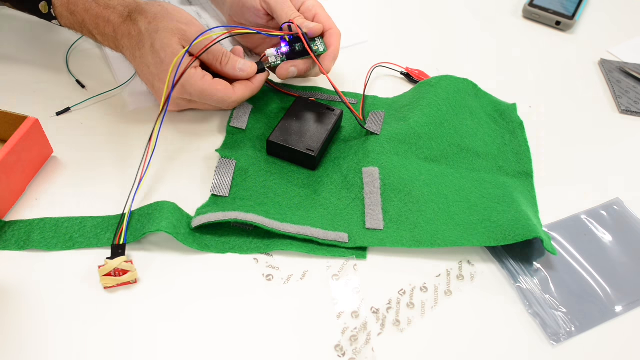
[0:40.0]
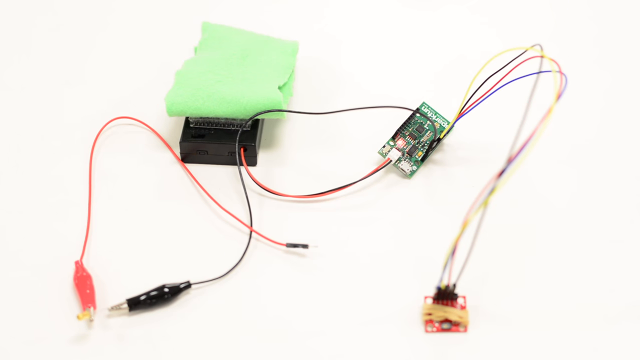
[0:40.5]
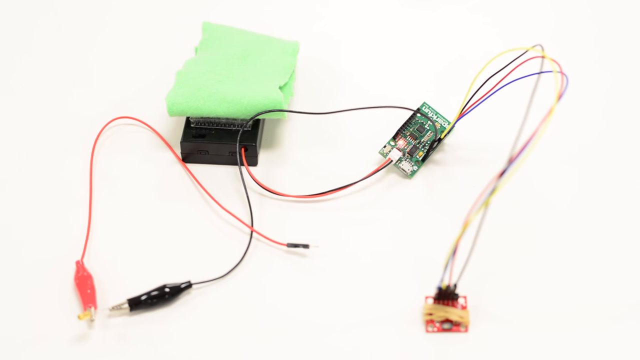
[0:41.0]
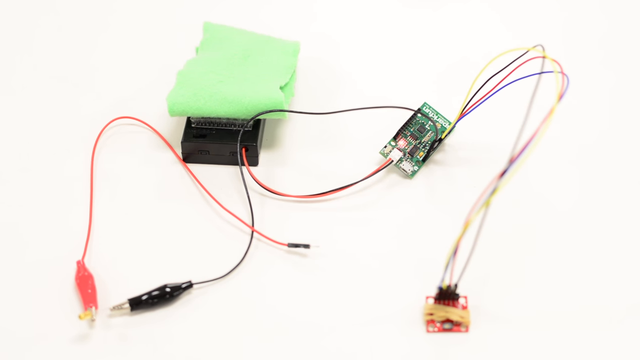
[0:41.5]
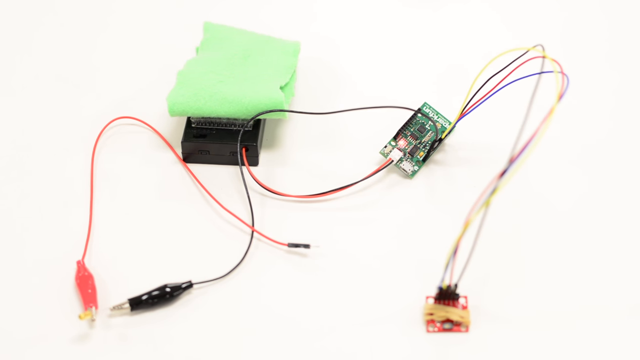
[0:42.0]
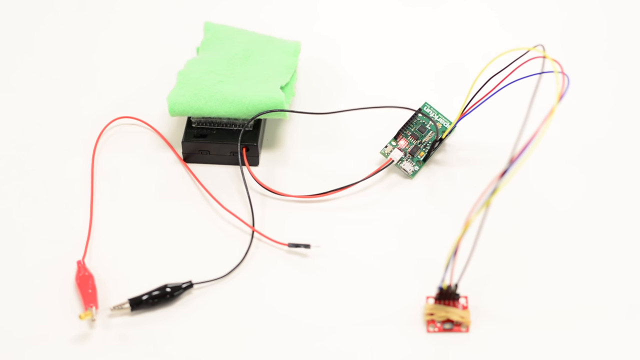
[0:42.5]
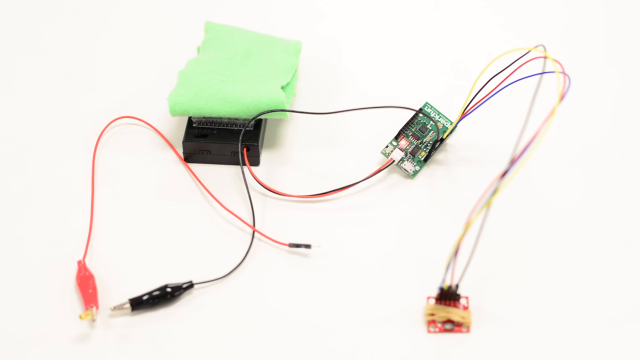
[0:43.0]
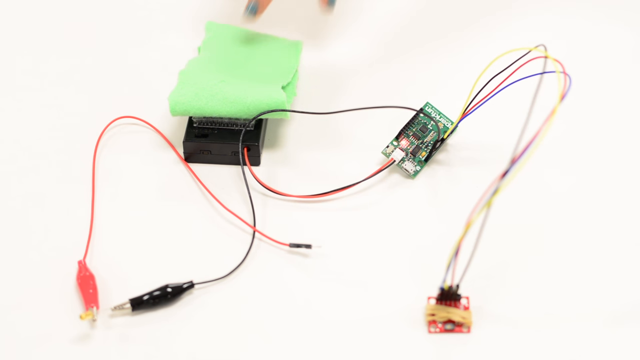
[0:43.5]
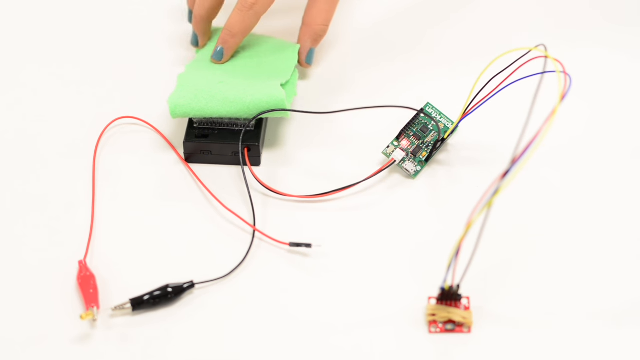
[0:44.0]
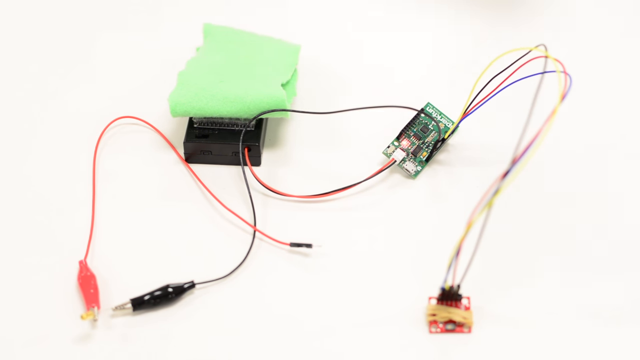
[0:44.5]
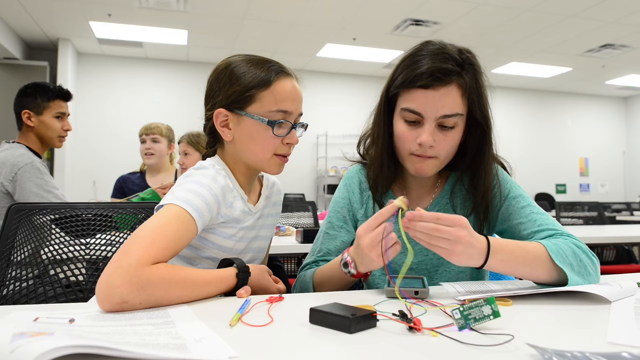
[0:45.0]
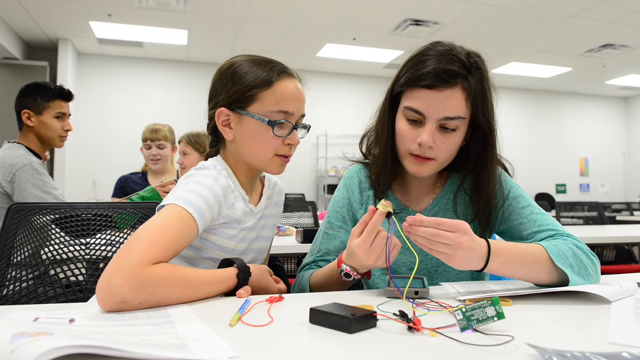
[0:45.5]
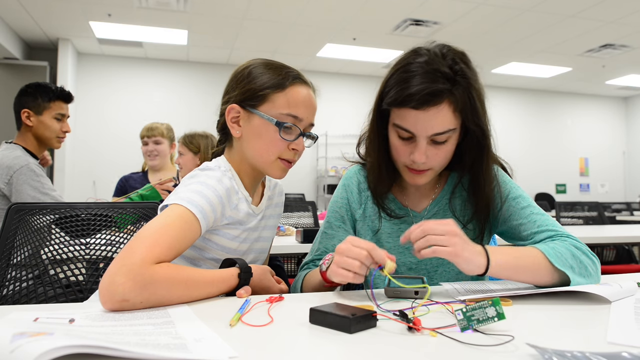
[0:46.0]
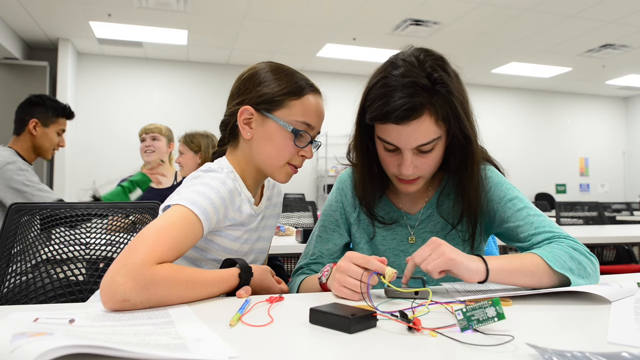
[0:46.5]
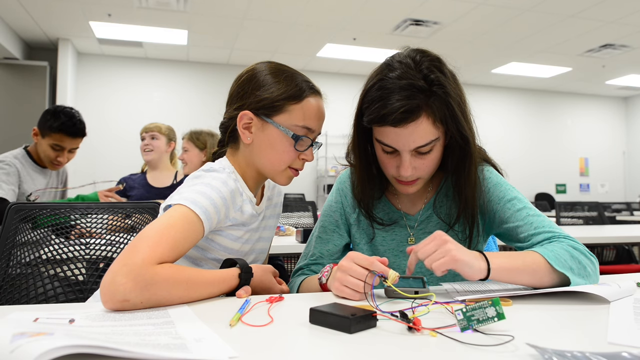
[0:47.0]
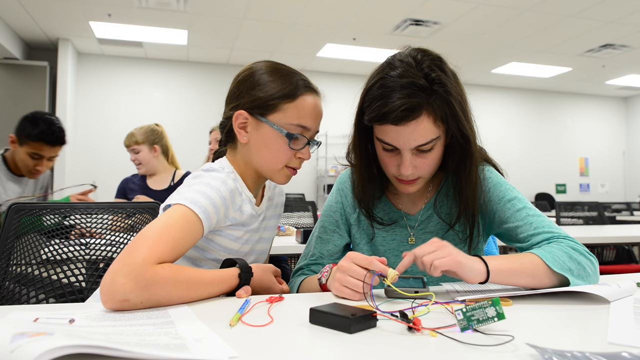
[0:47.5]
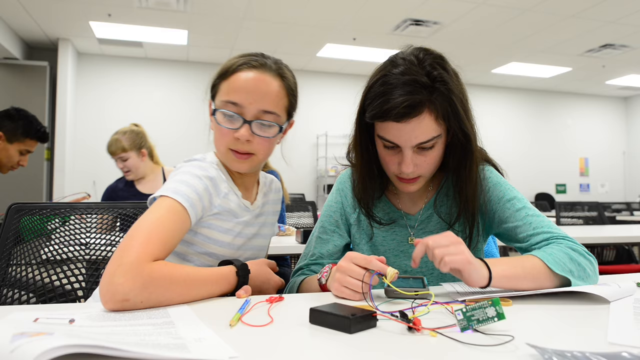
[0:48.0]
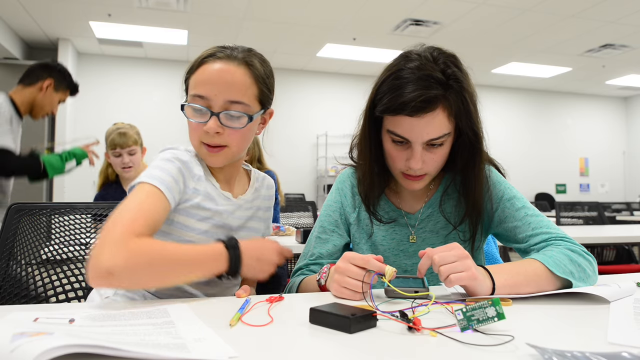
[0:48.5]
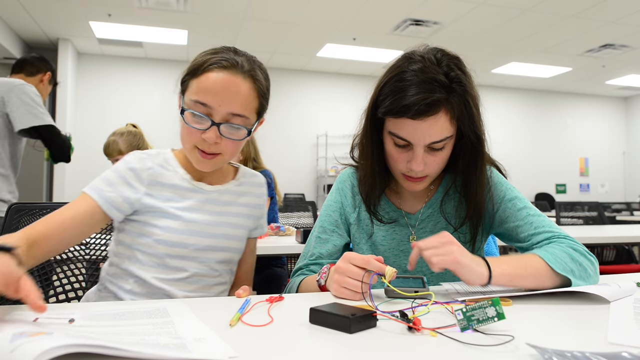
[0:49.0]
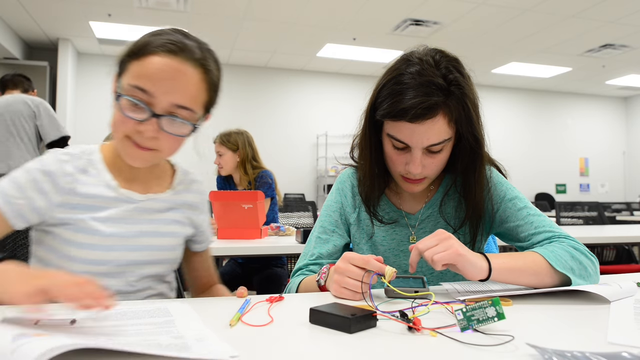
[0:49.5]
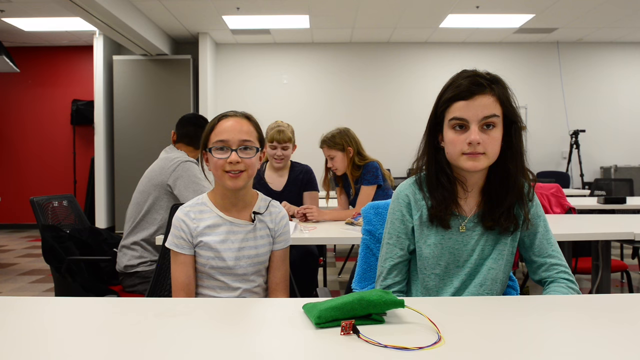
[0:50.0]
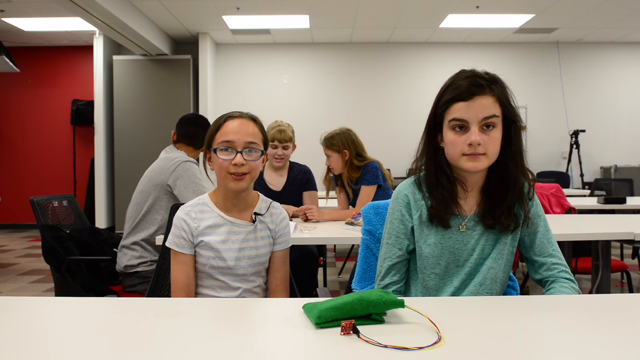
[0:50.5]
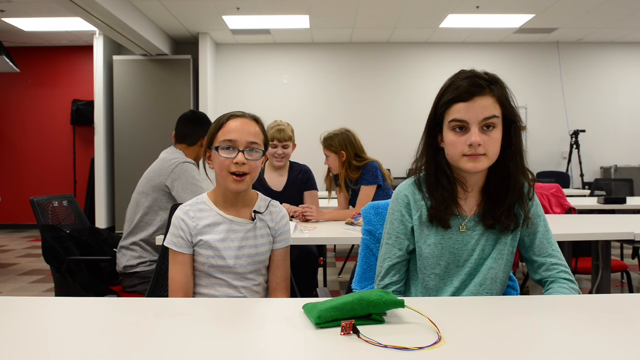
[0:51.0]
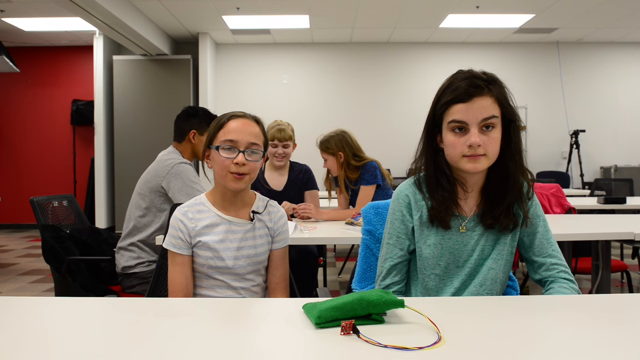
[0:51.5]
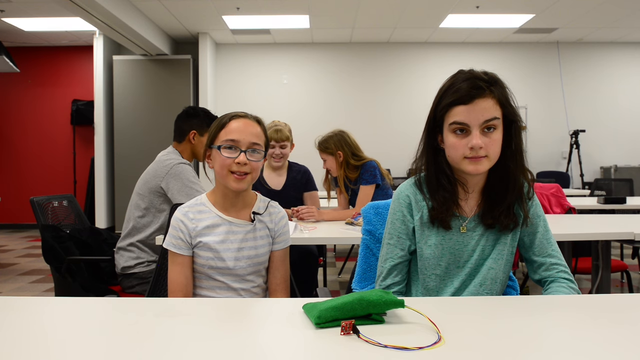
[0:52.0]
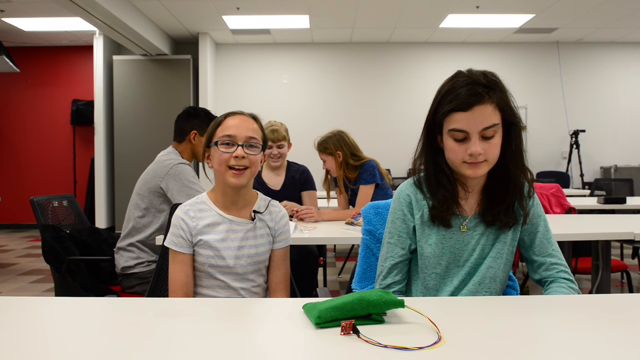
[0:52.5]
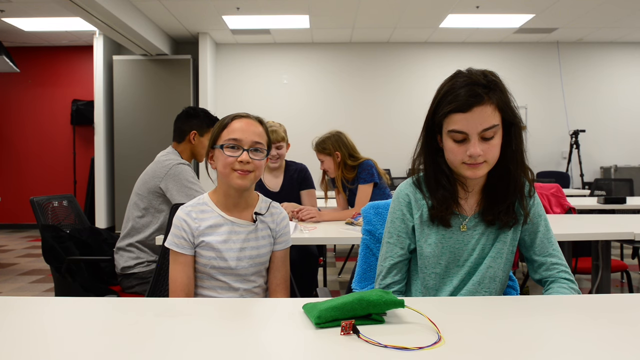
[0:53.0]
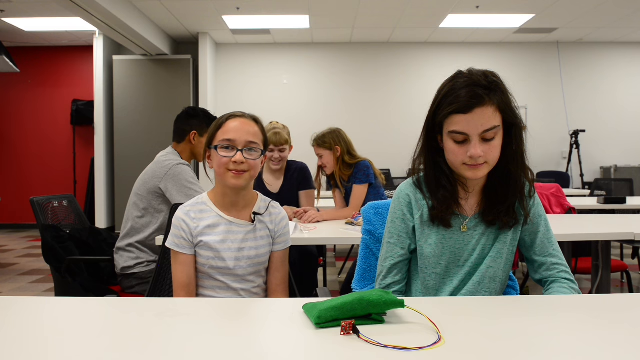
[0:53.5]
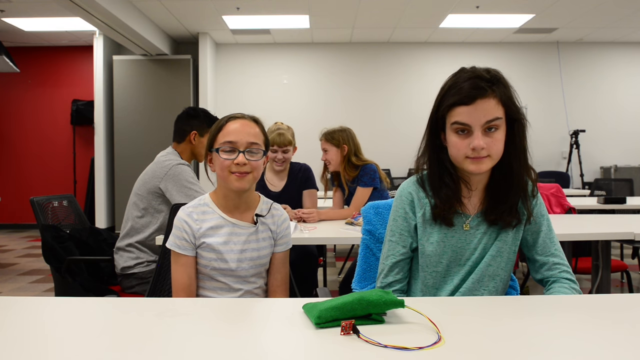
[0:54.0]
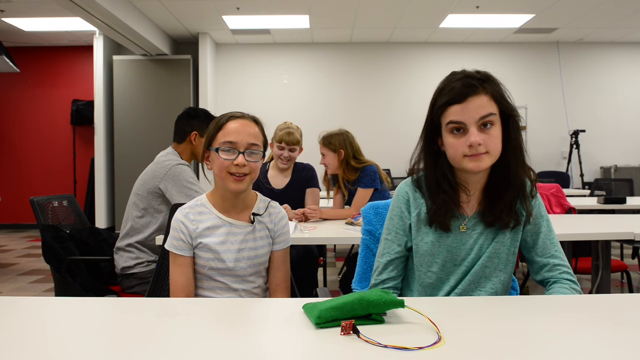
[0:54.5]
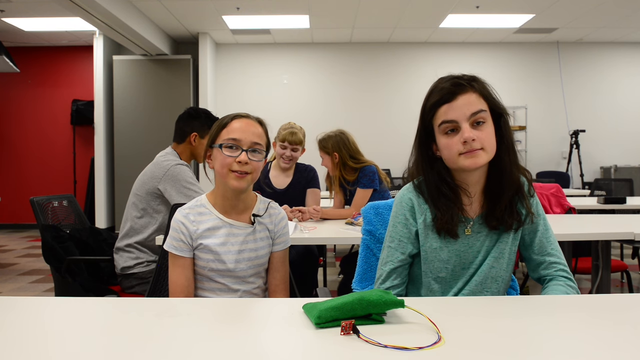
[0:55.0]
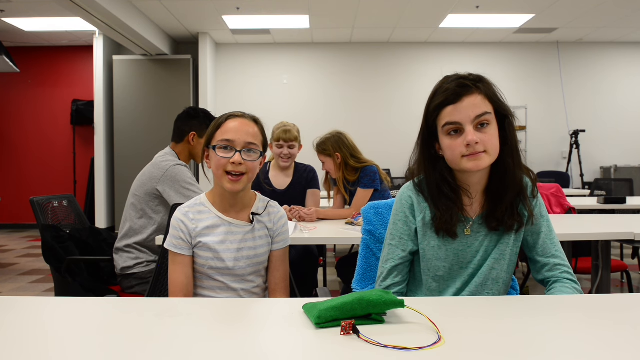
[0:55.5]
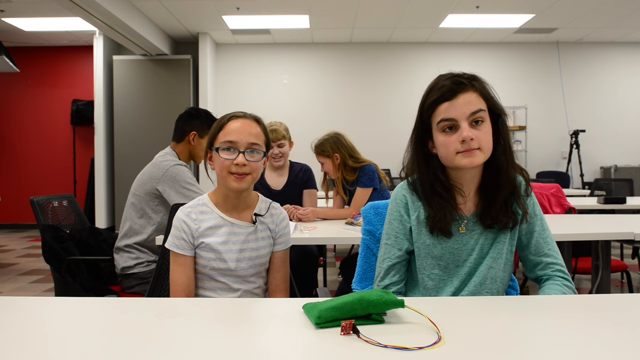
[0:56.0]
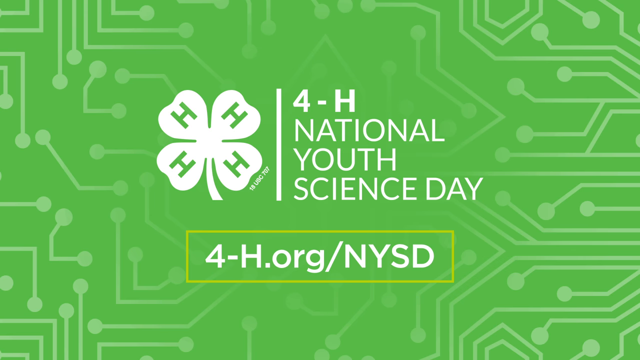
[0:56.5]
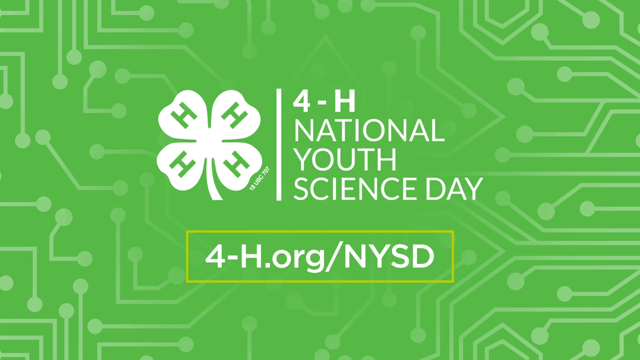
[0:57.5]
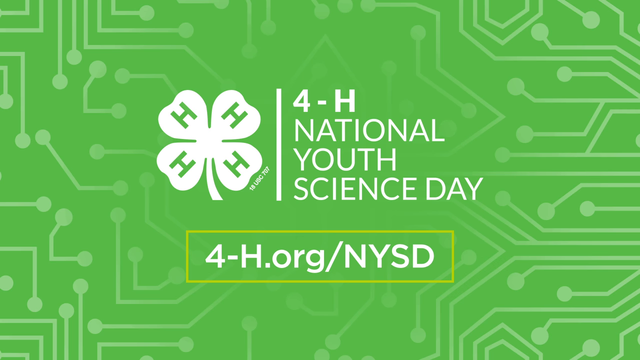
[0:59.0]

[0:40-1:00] A connection is shown with a motherboard, something black and some wires: a black wire, a black wire with something at the tip, and a red wire with something at the tip. A hand picks up the green thing. Another shot shows some people seated; in front are two ladies, one in a green t-shirt and the other in a white t-shirt. The one in the green t-shirt seems to be pressing a phone while having something on the hand, and at the back a lady and a woman are talking. Something green is then placed on the table, and the girl in white seems to be talking. The video ends on a green screen with lines like a connection and writing that says "4H National Youth" along with further text.